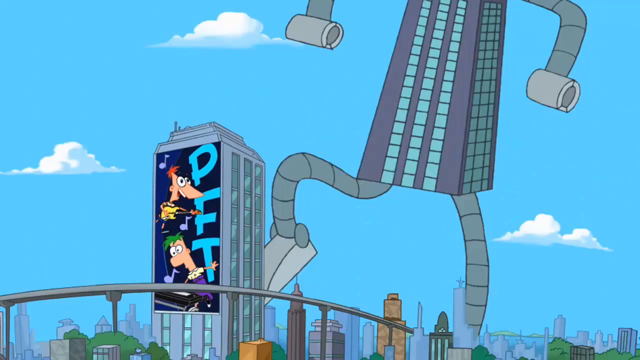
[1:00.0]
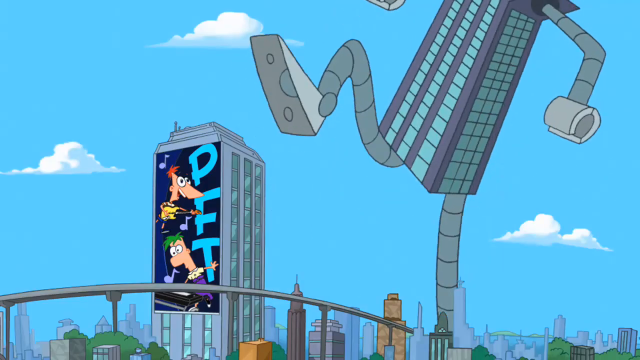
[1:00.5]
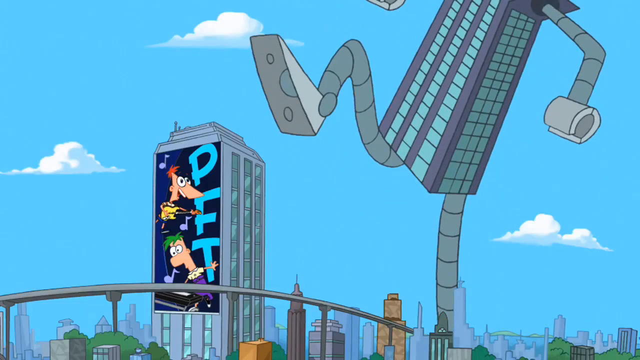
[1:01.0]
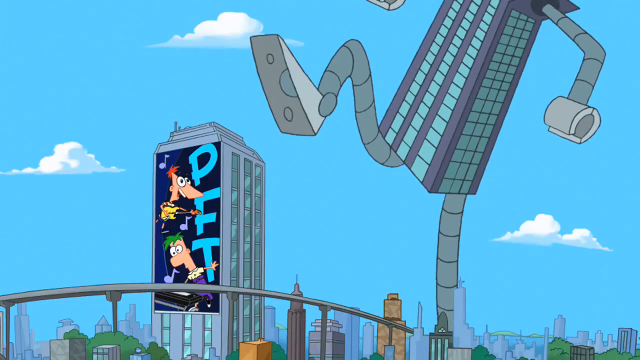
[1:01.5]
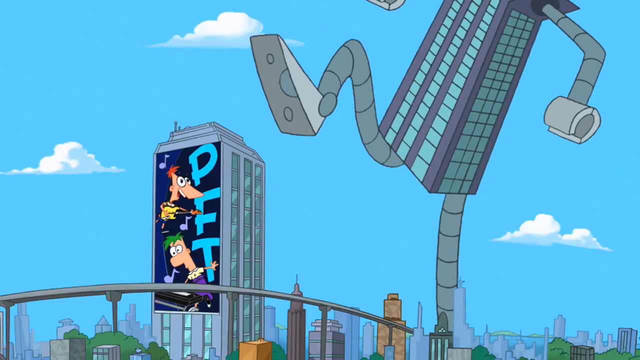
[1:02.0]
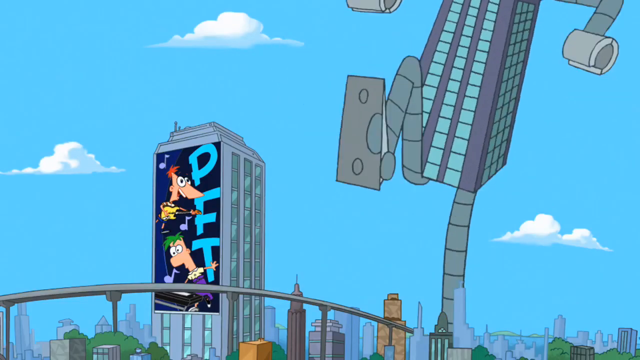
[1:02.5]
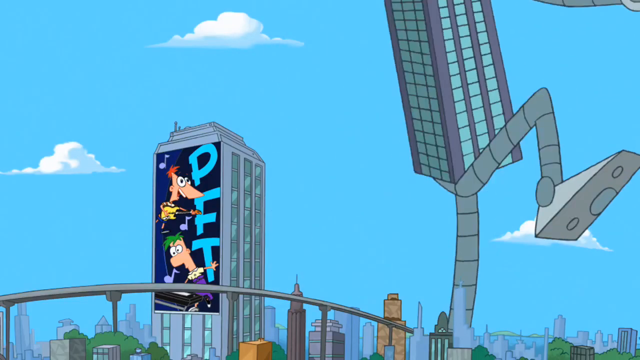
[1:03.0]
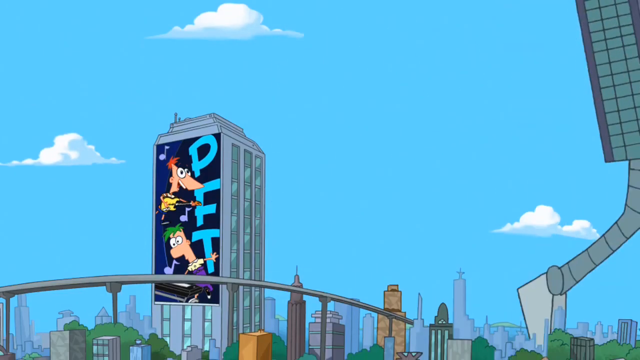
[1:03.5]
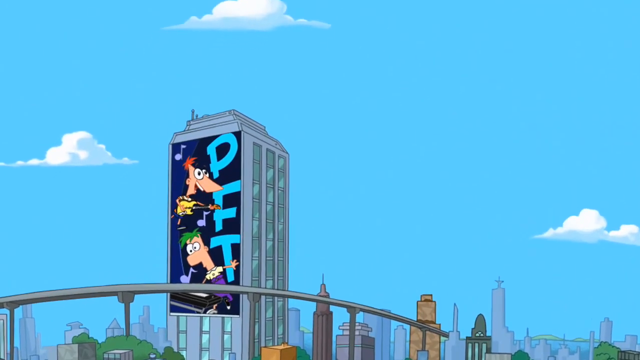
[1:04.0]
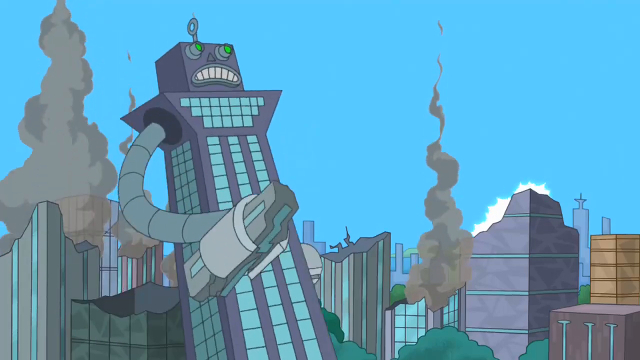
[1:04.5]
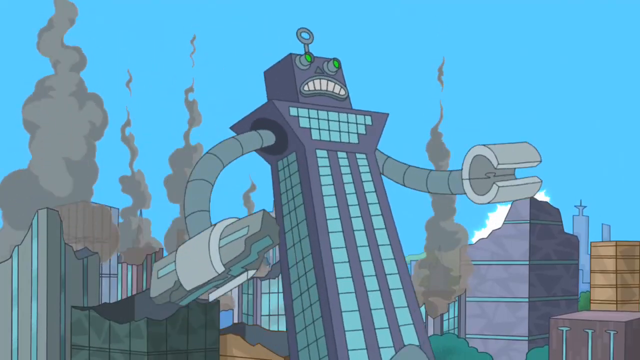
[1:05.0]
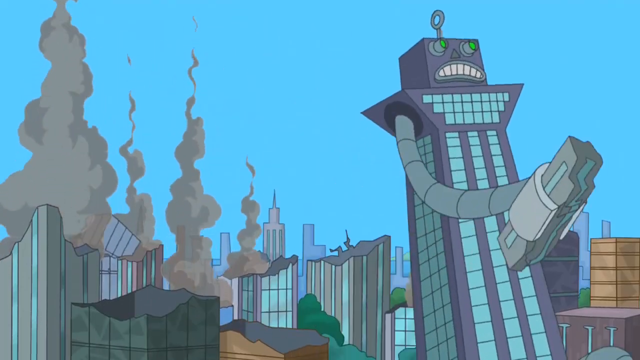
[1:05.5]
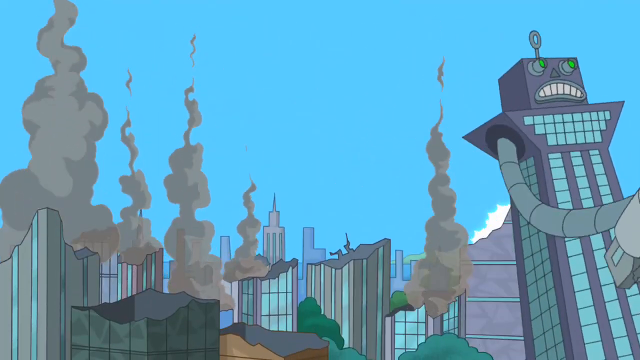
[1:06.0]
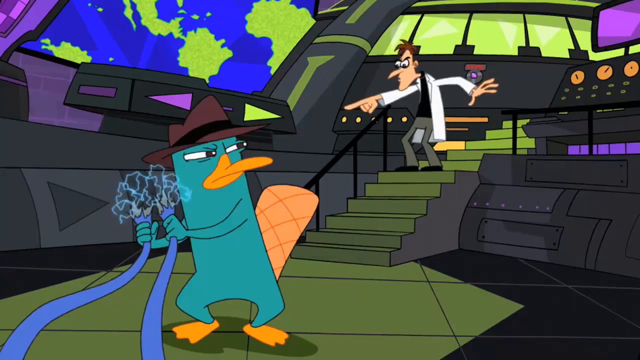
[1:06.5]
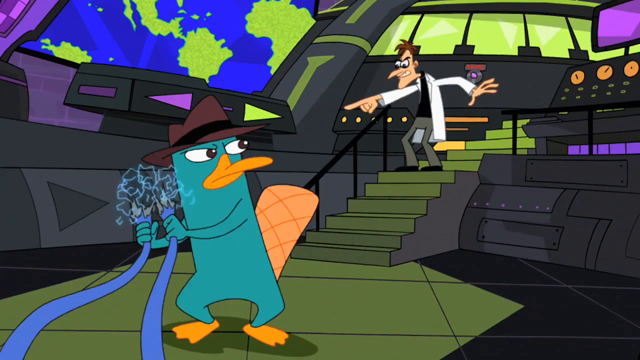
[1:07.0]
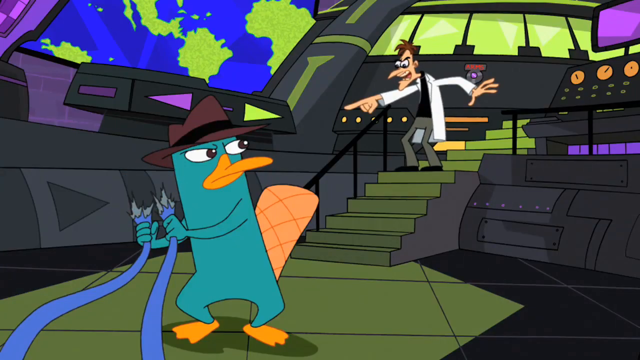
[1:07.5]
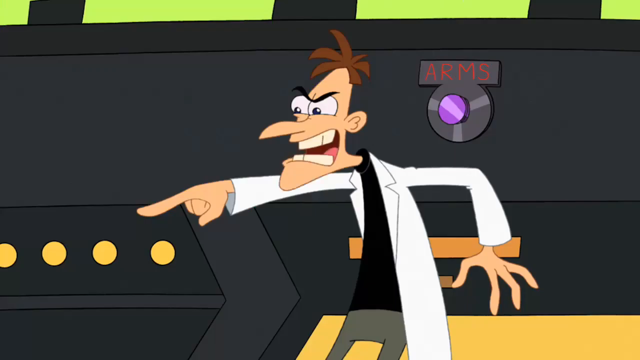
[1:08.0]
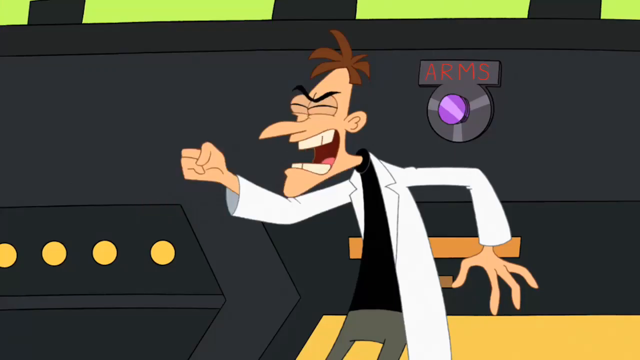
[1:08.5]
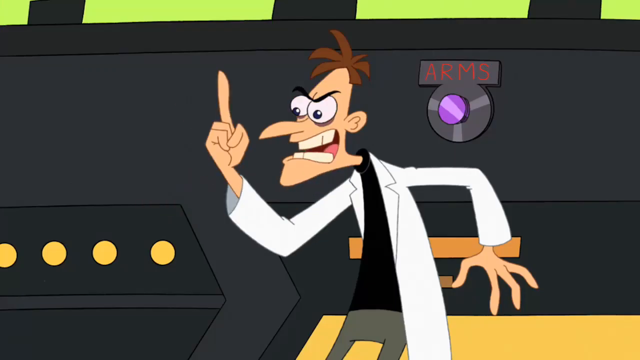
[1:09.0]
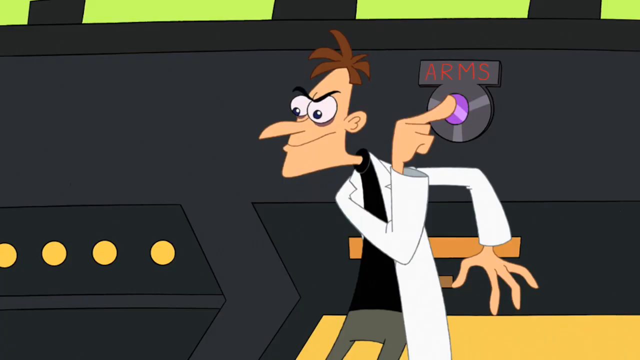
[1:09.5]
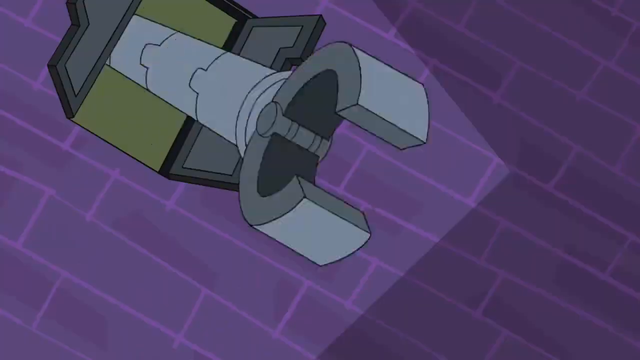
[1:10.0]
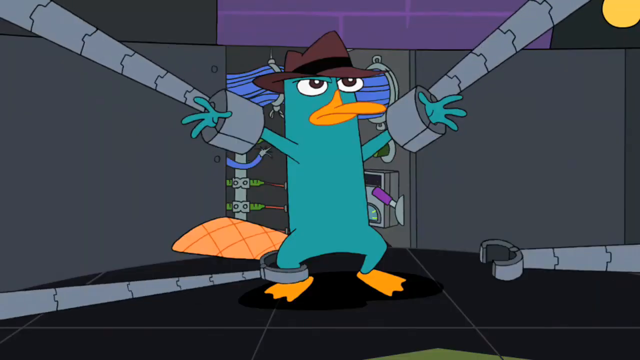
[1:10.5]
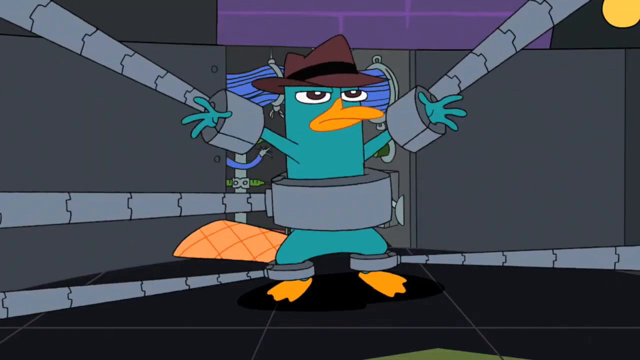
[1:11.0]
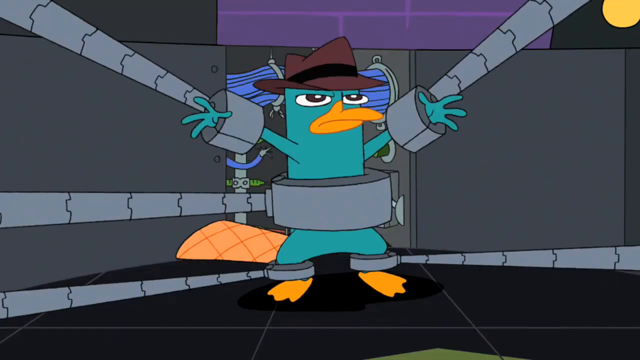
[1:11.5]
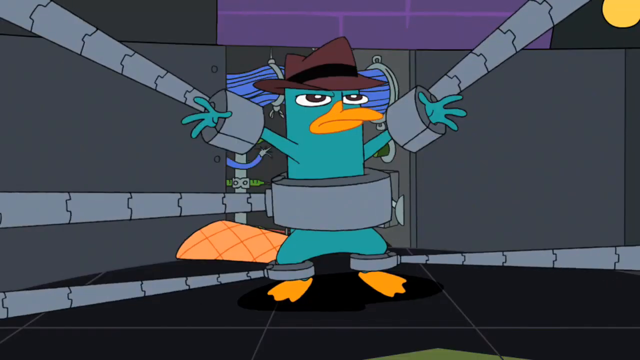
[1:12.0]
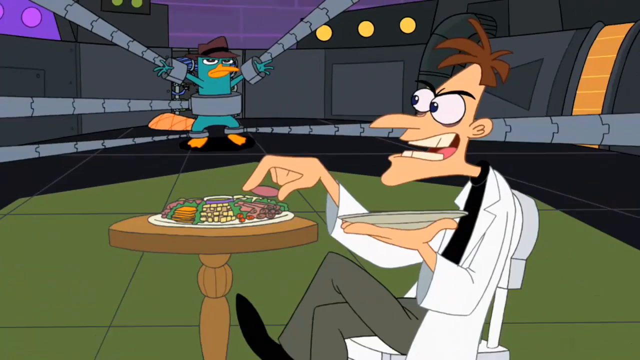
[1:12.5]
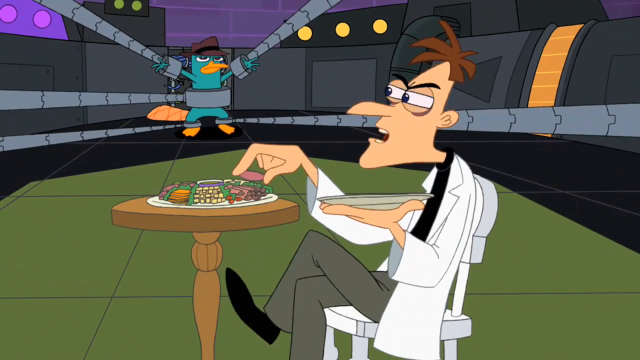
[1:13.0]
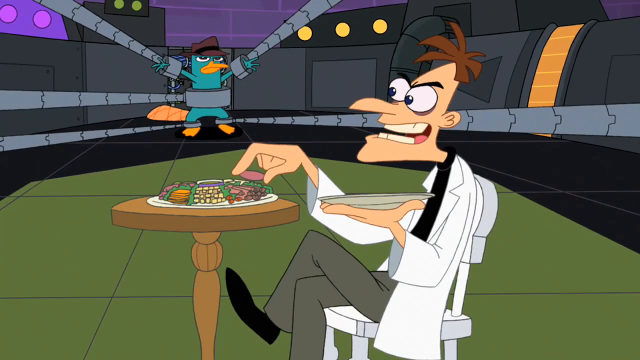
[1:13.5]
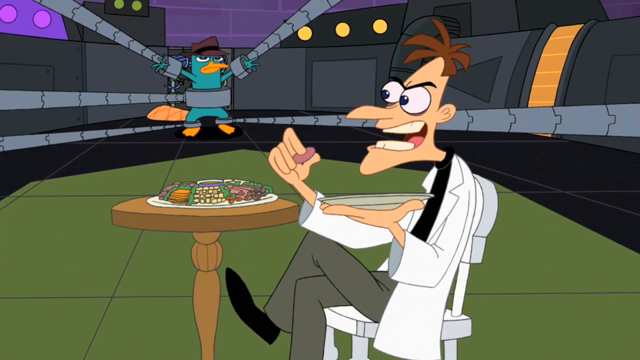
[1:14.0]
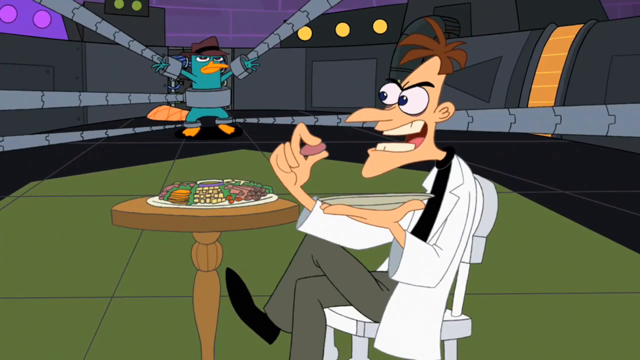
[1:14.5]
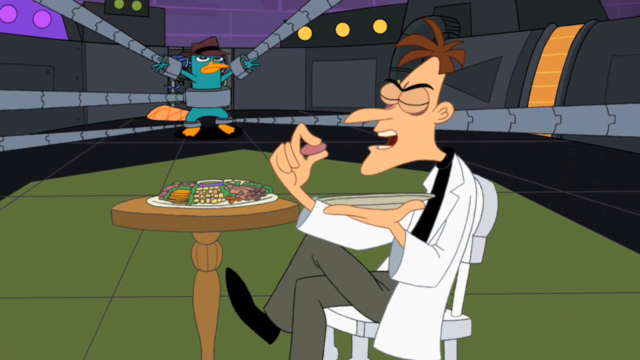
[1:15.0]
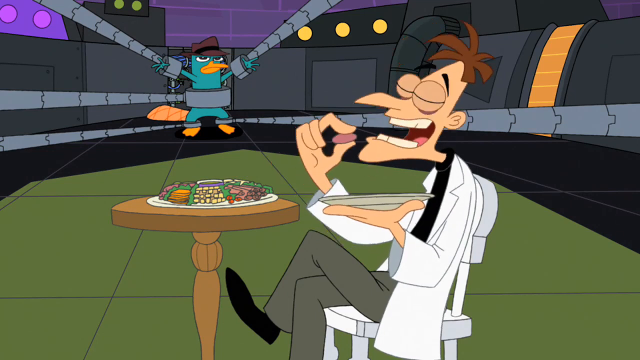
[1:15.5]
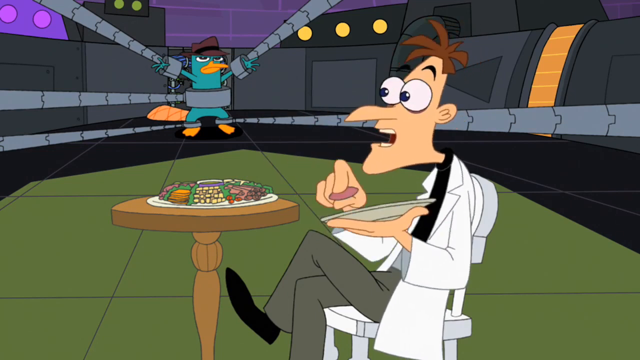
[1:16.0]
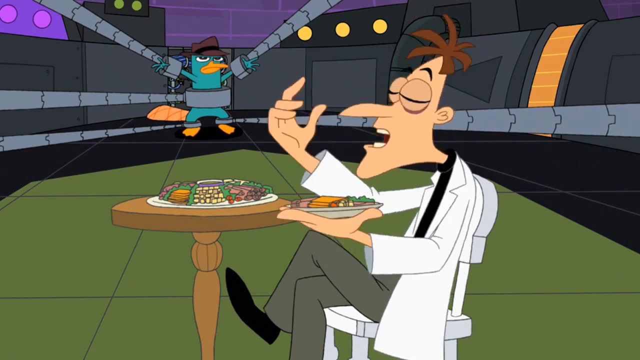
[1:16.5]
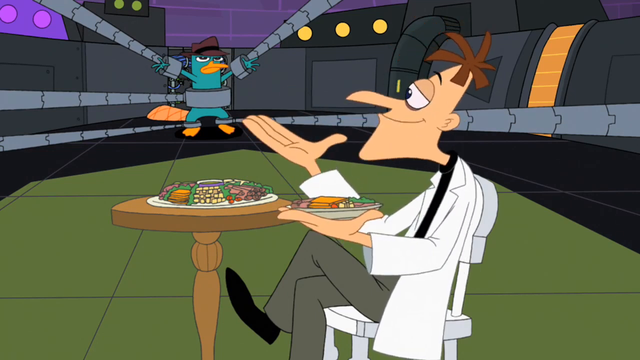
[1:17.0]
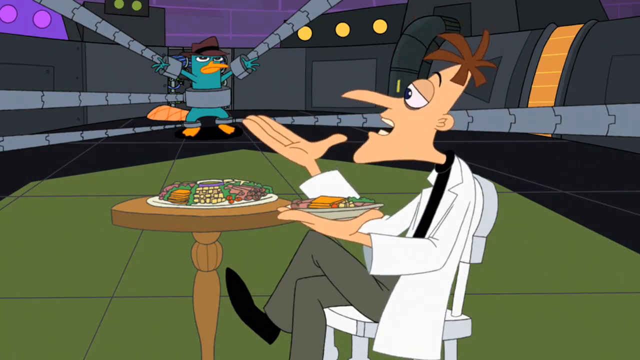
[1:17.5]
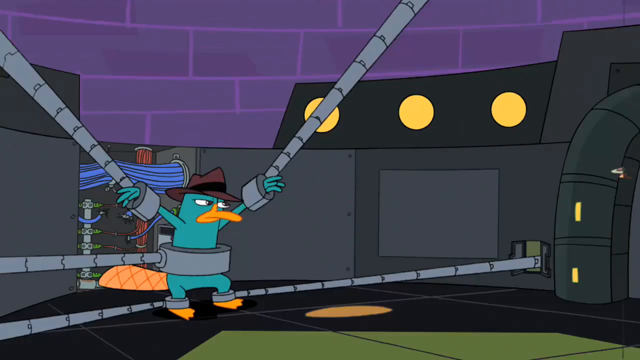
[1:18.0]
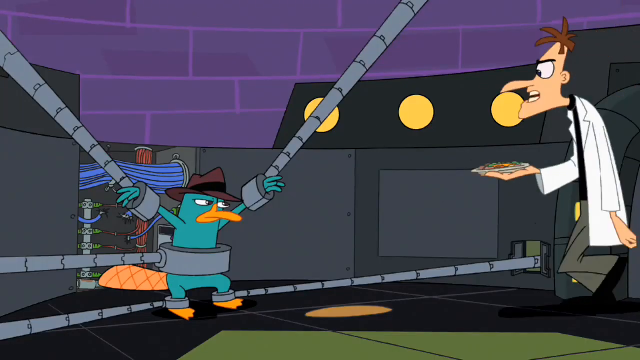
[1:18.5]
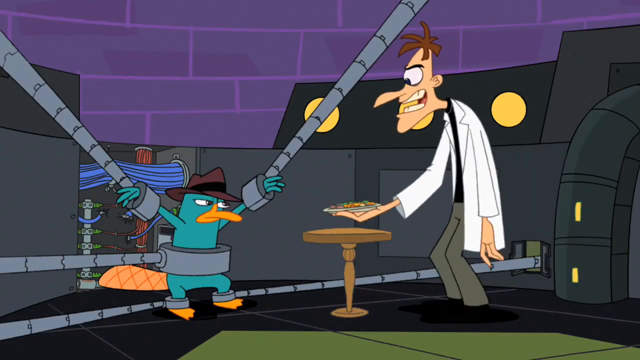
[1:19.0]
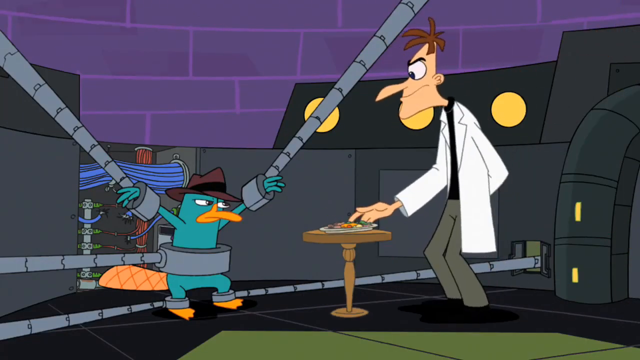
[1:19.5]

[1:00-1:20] The platypus character works to stop the destruction while the robot continues to rage around town. The mad scientist seizes him and traps him in some sort of robotic contraption that binds him by his arms and legs with metal restraints, kind of like handcuffs, ties or tubes. The platypus seems to make an effort to stop the scientist but is overwhelmed. The scientist has gadgets inside the robot that he apparently uses as weapons to restrain him.